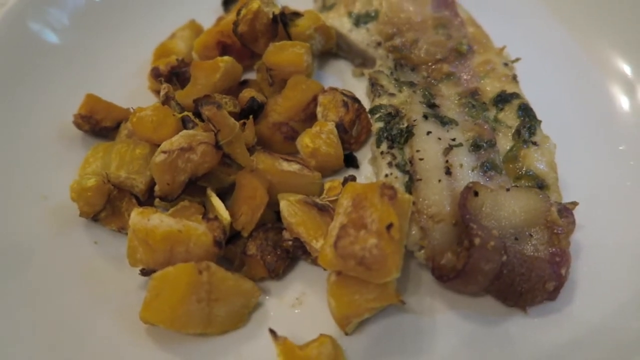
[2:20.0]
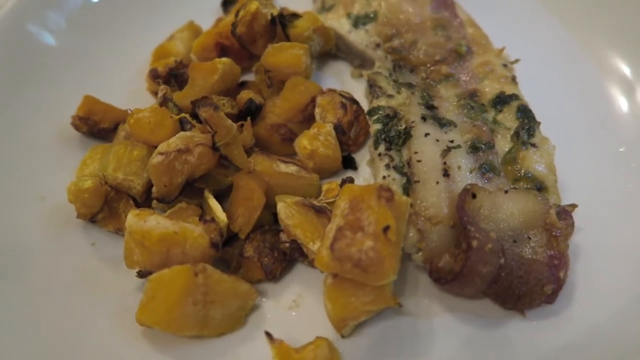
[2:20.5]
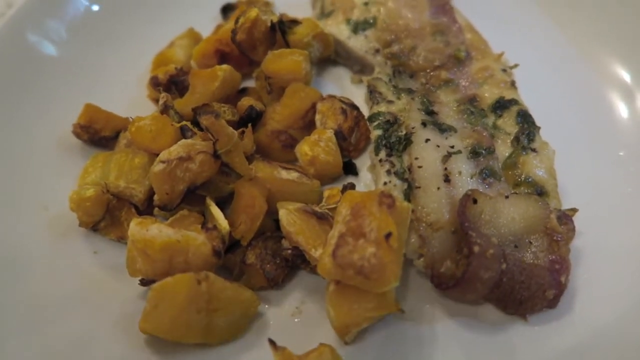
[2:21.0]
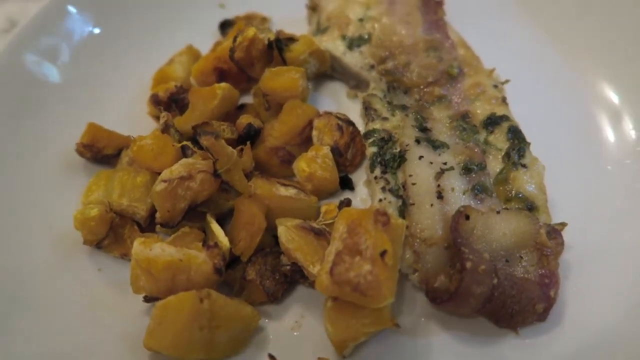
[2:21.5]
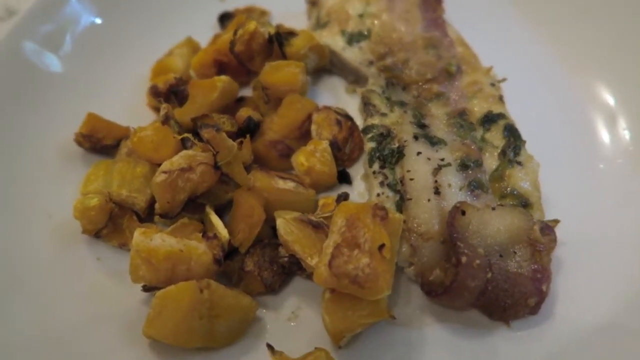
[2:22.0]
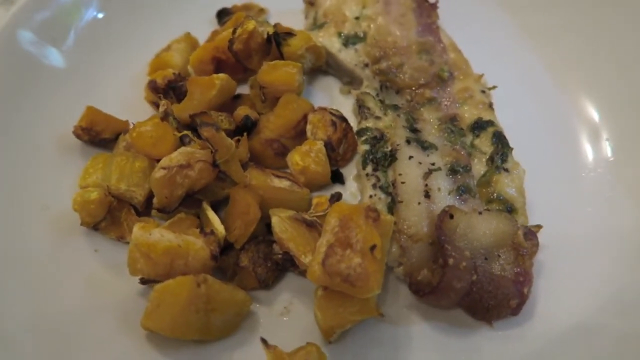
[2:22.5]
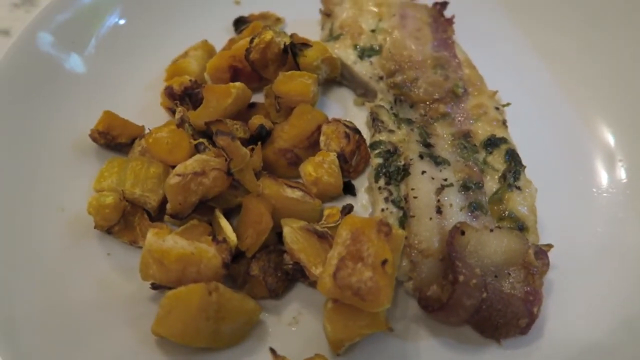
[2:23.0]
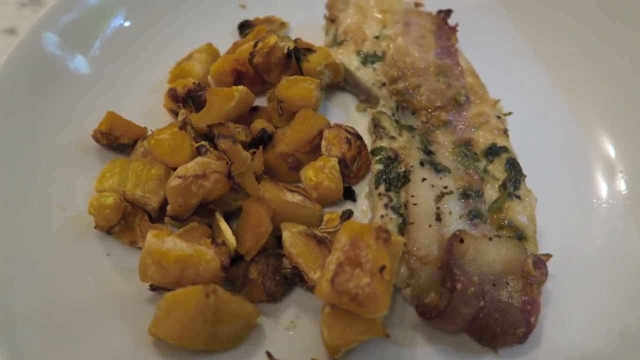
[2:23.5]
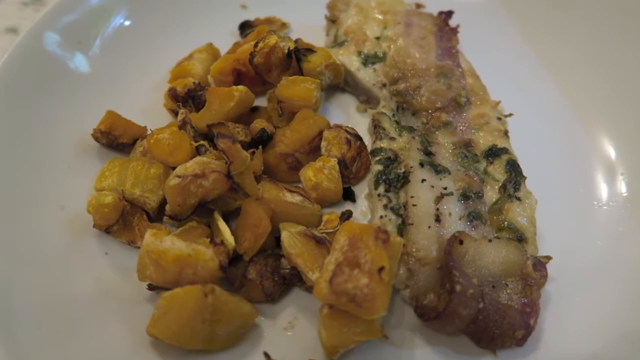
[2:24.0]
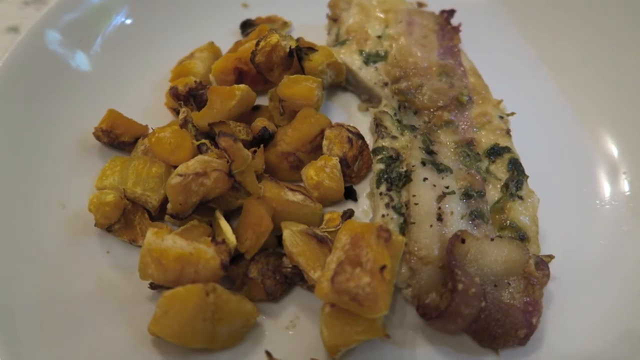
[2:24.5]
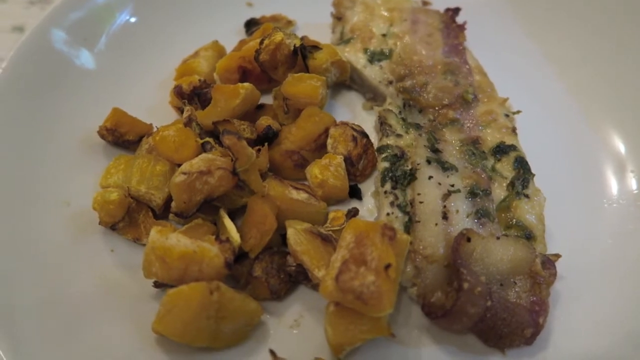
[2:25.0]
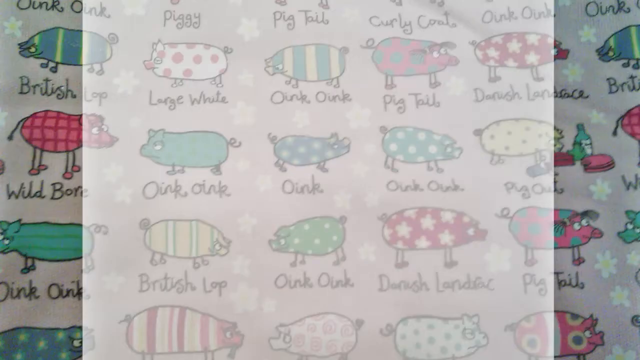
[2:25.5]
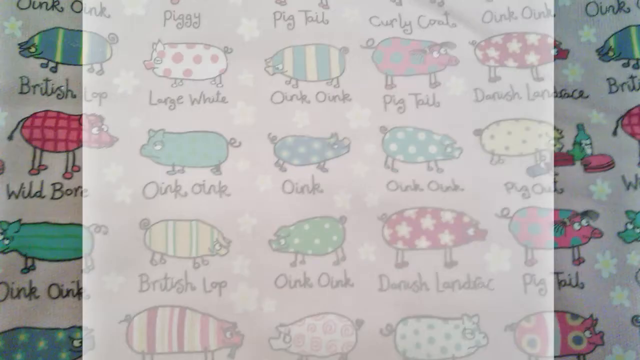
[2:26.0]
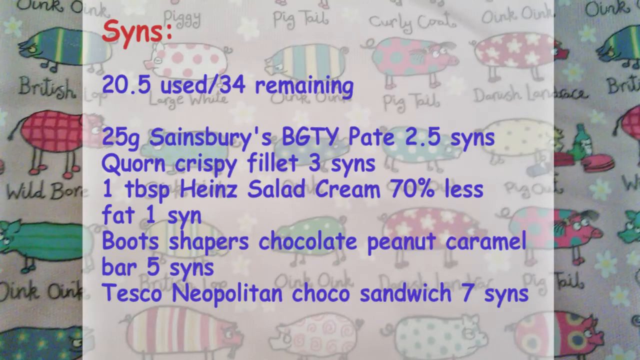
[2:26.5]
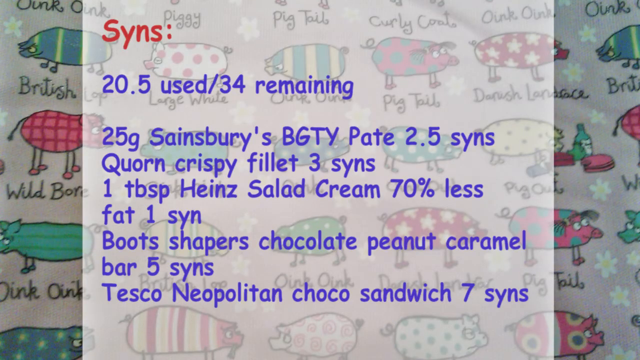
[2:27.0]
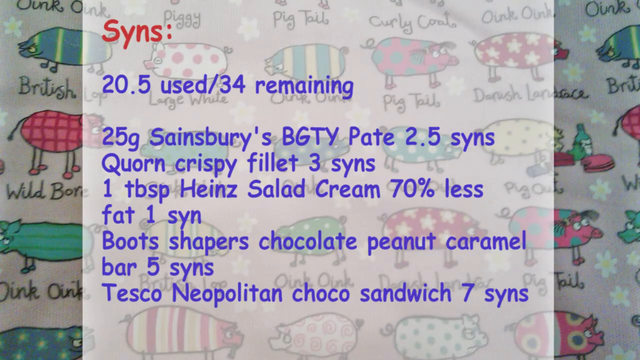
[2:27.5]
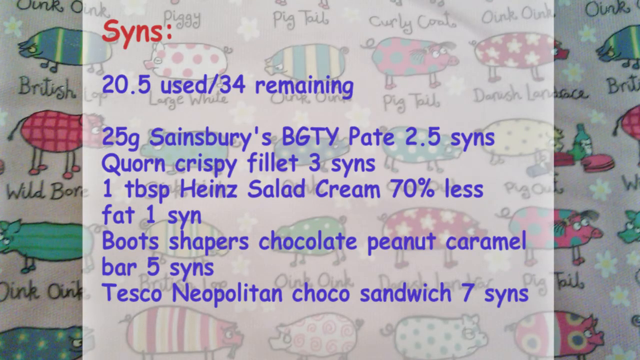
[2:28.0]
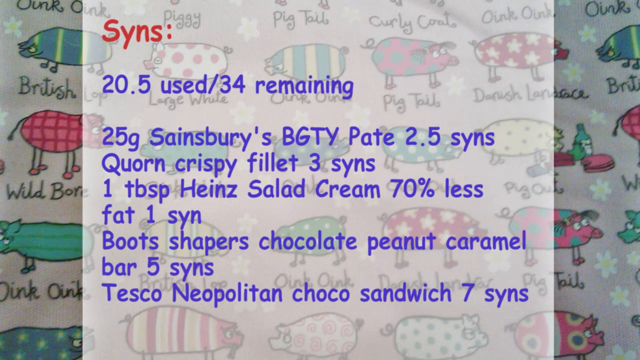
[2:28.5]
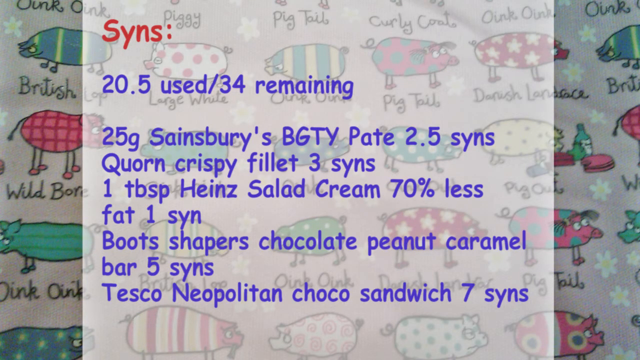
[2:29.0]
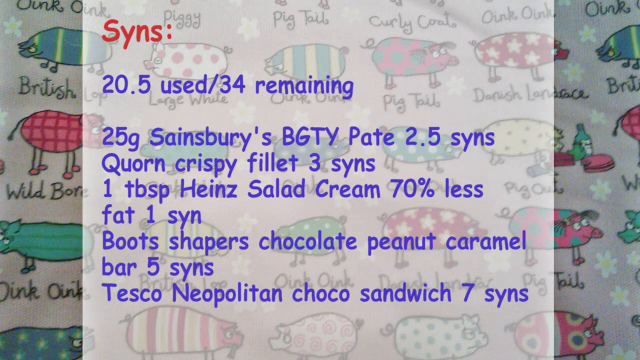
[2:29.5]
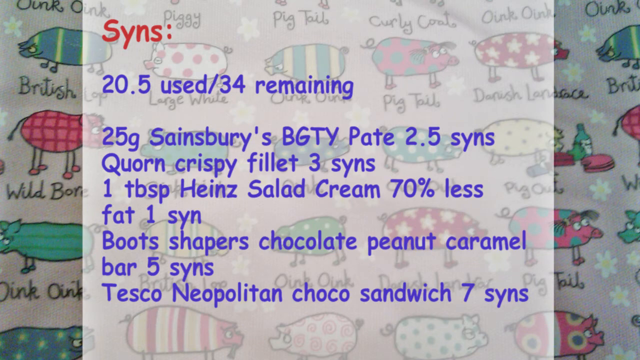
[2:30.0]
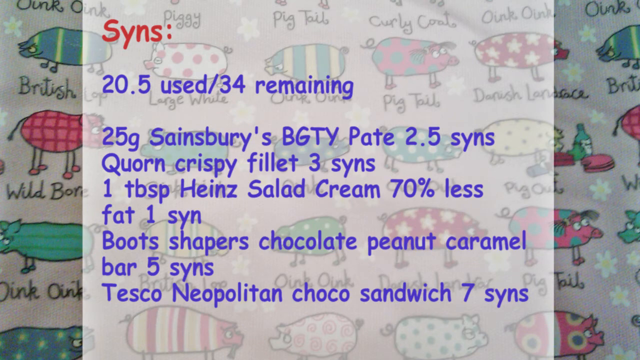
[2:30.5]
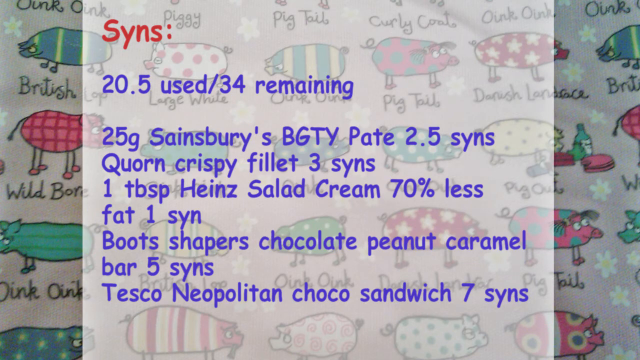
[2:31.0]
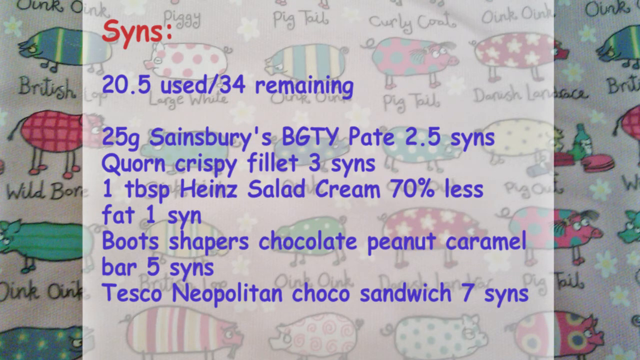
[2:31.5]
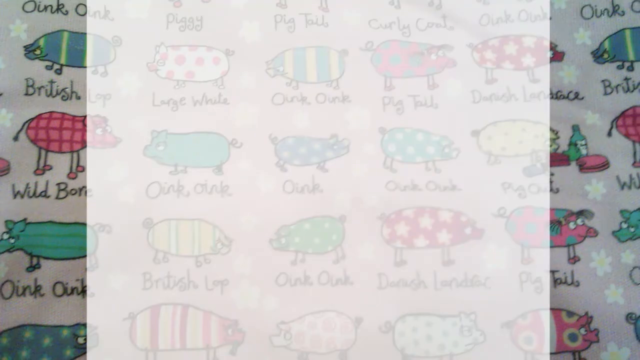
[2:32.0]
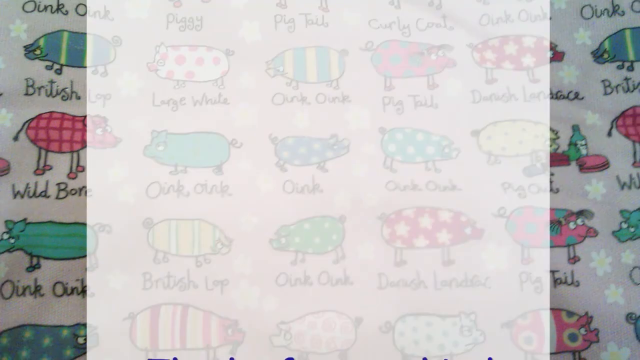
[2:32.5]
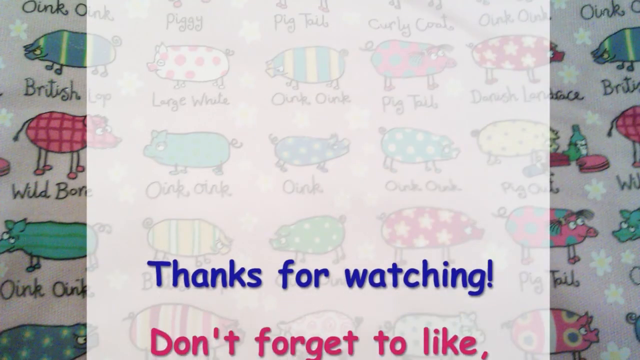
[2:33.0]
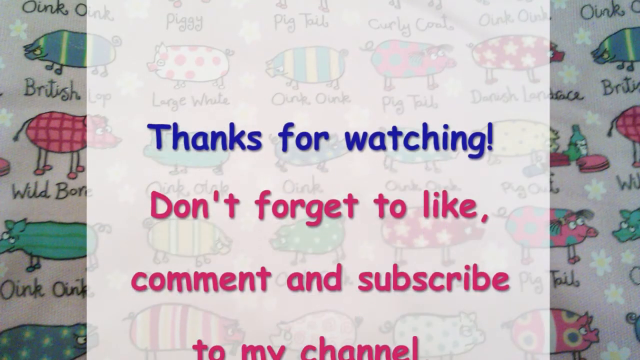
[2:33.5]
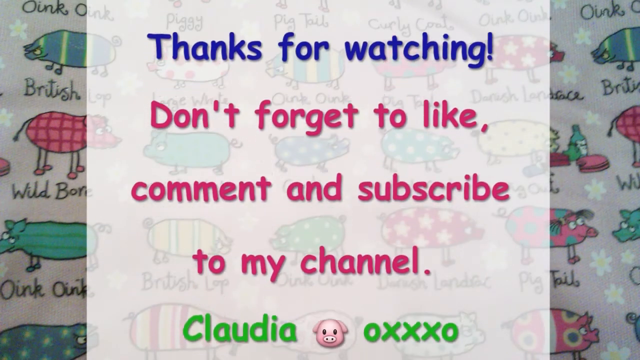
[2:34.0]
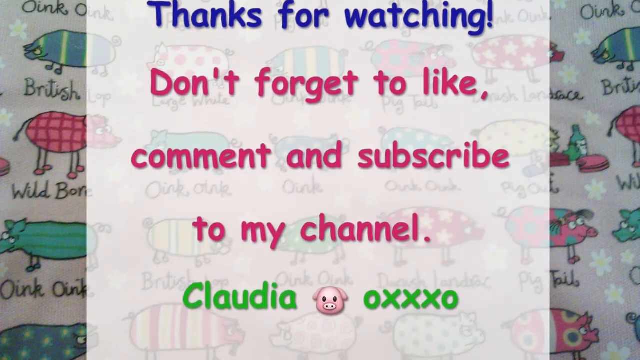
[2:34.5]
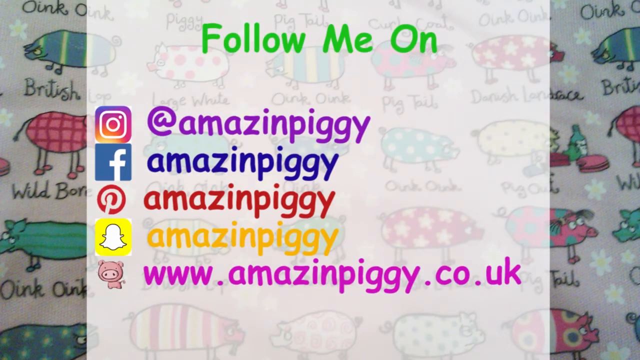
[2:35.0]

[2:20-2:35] A dish holds butternut cut into cubes that appear roasted. Next to the butternut is fried bacon with greenish spinach on top of it; the bacon does not look oily. The camera surrounds the plate as it shows it. Then some text appears, including "34 remaining," followed by more text. At the end of the video, text reads "thanks for watching don't forget to like comment and subscribe to my channel," and the channel name Claudio is shown.